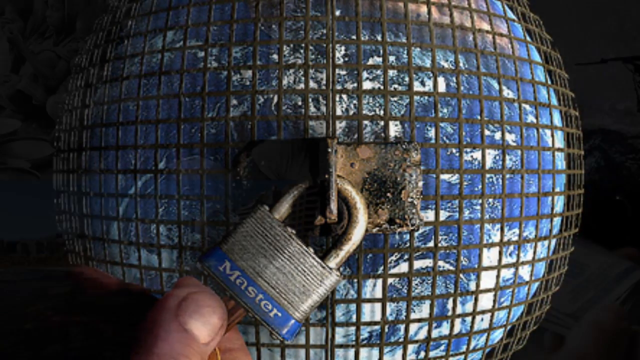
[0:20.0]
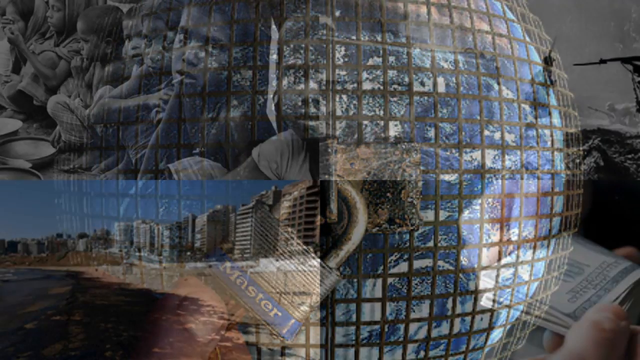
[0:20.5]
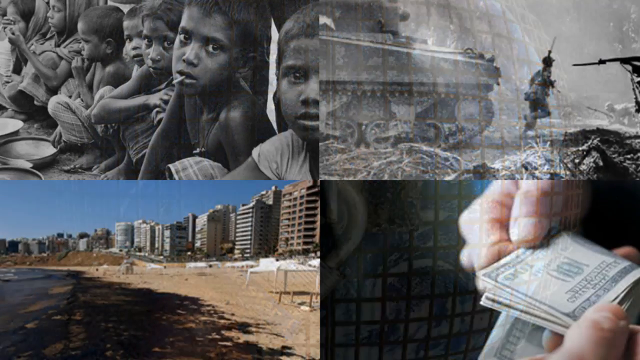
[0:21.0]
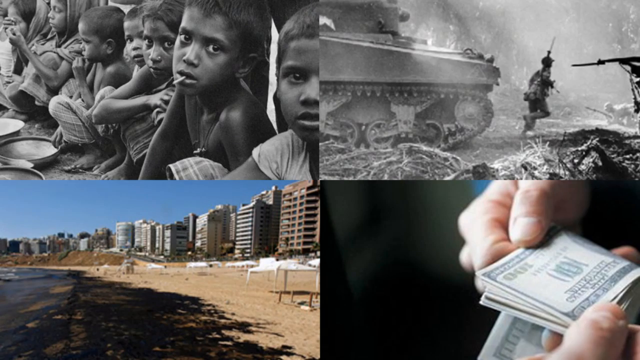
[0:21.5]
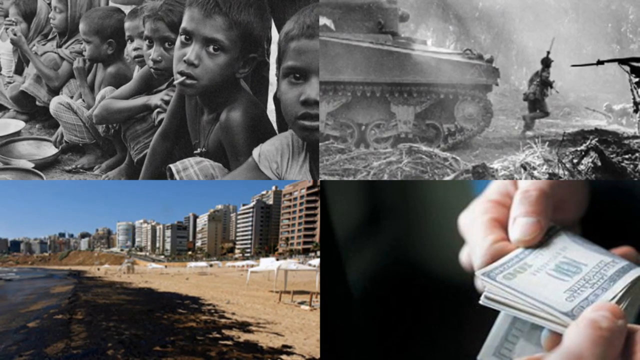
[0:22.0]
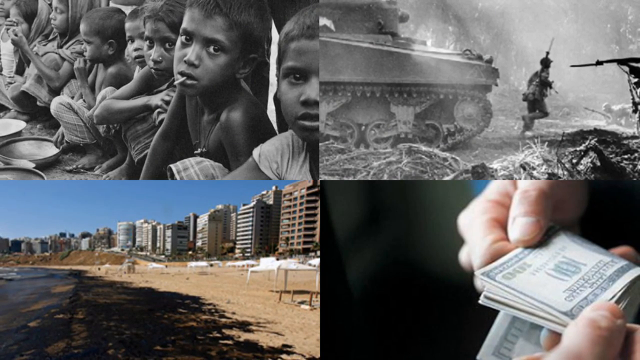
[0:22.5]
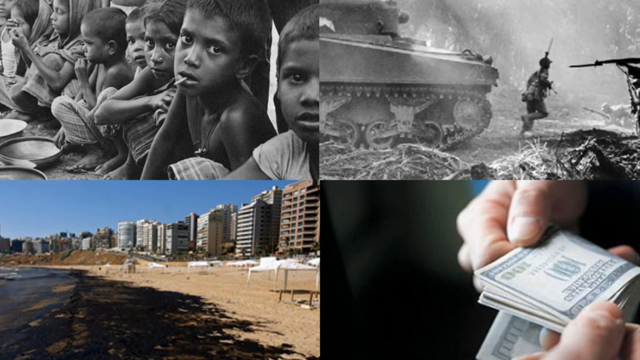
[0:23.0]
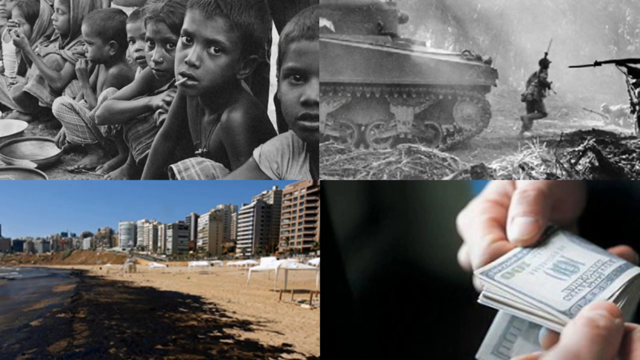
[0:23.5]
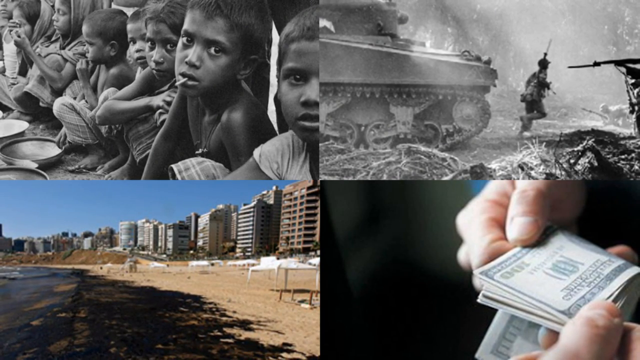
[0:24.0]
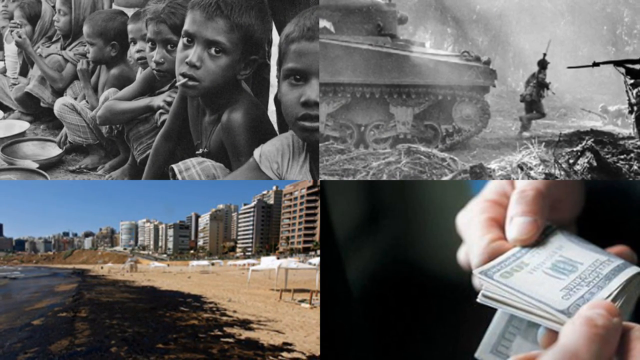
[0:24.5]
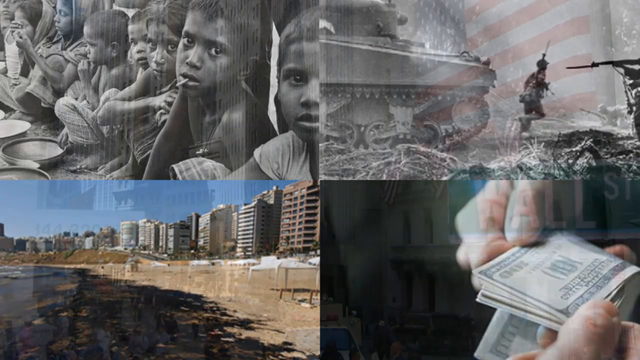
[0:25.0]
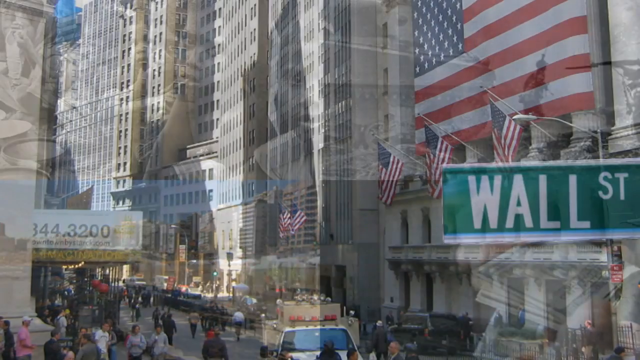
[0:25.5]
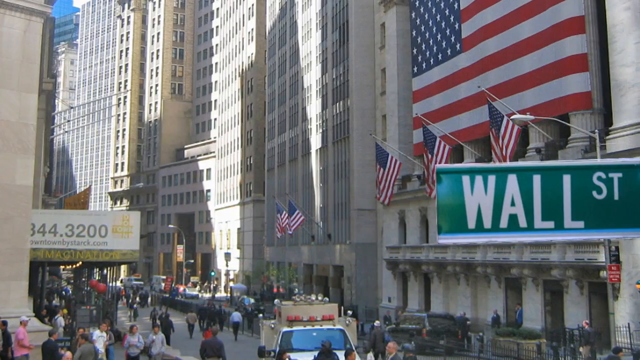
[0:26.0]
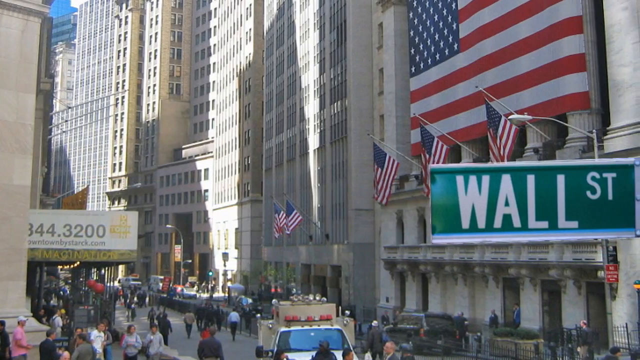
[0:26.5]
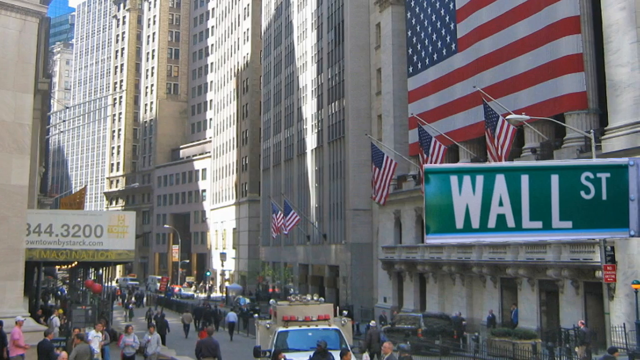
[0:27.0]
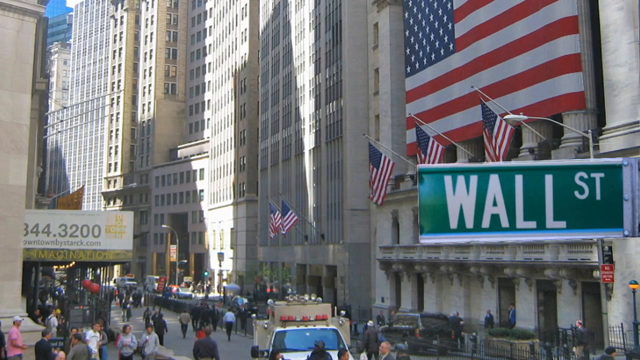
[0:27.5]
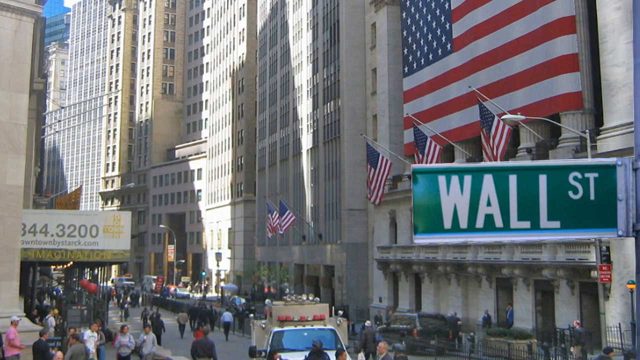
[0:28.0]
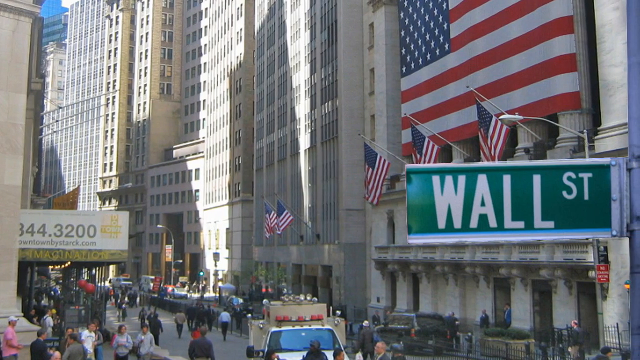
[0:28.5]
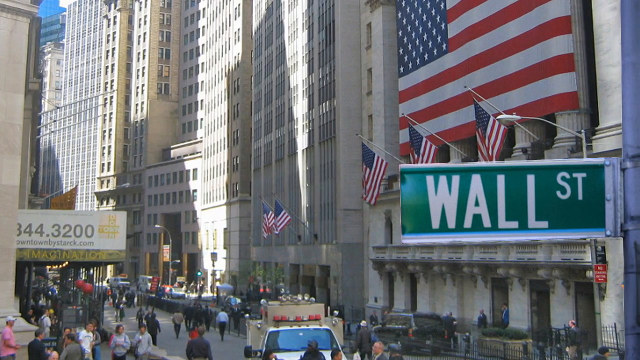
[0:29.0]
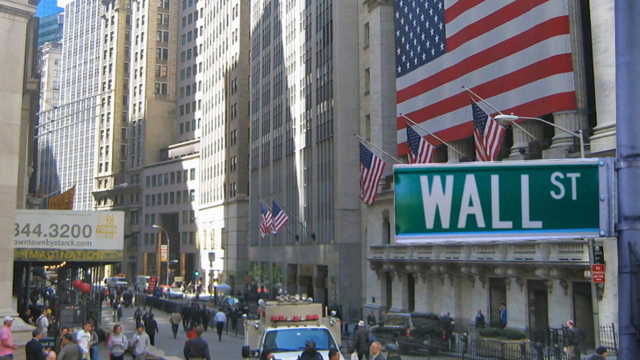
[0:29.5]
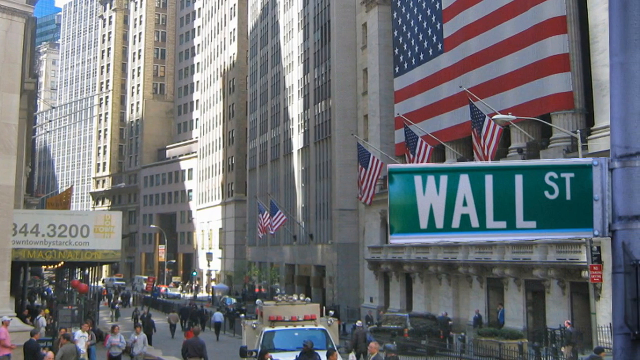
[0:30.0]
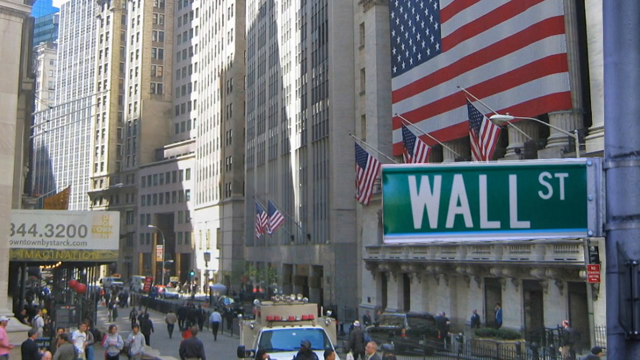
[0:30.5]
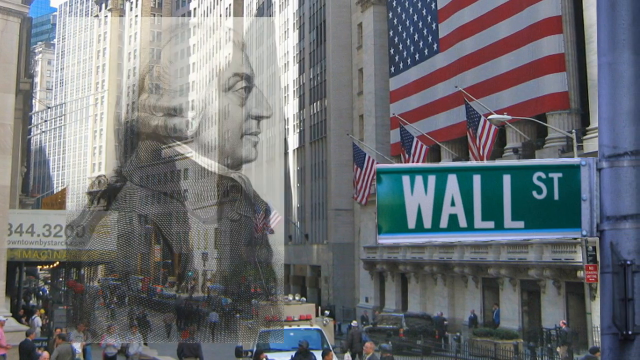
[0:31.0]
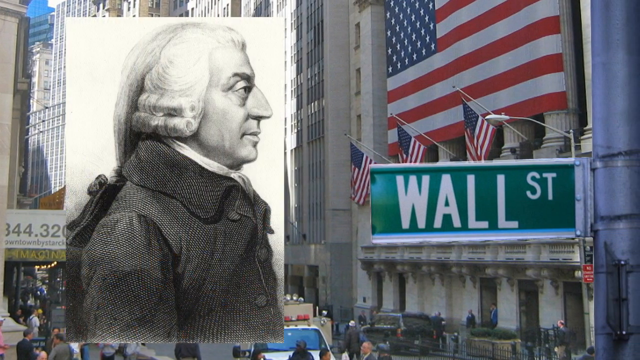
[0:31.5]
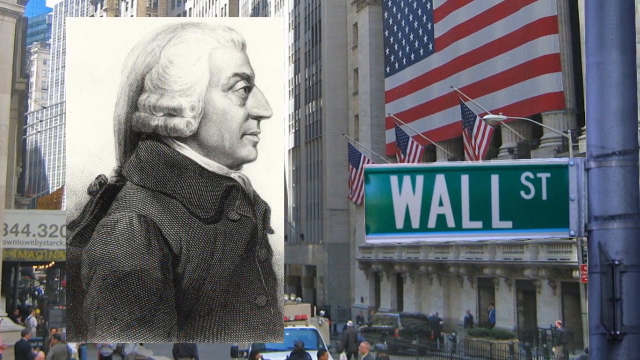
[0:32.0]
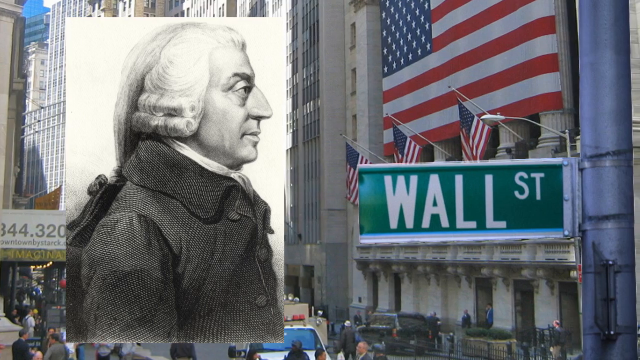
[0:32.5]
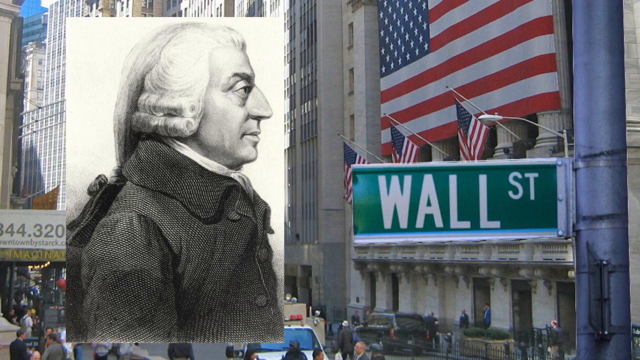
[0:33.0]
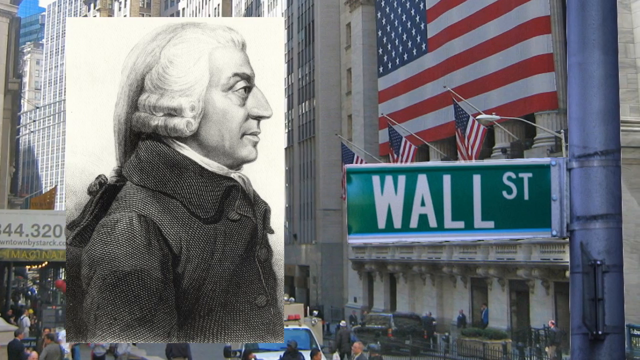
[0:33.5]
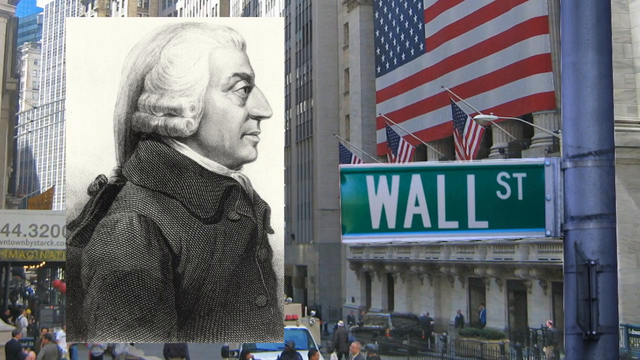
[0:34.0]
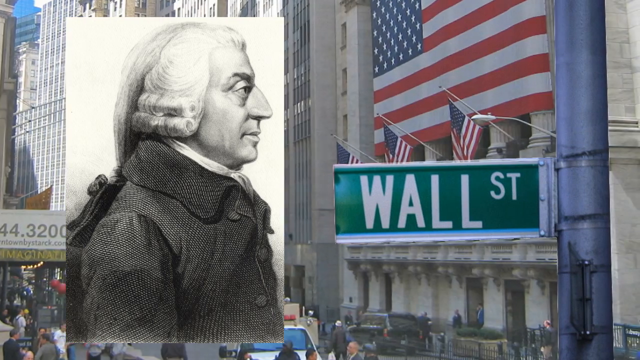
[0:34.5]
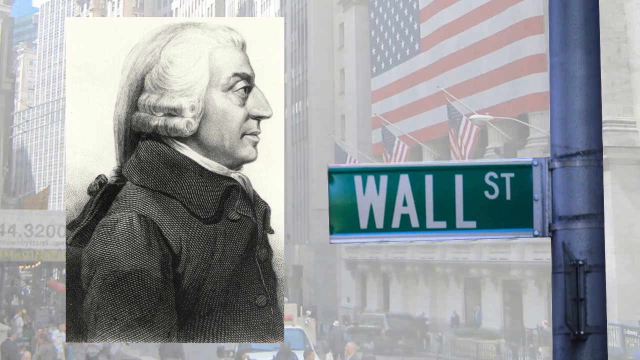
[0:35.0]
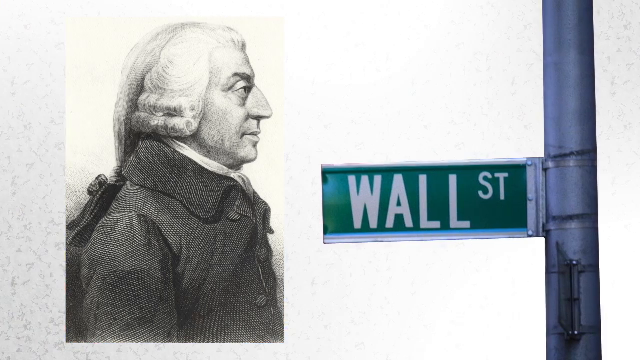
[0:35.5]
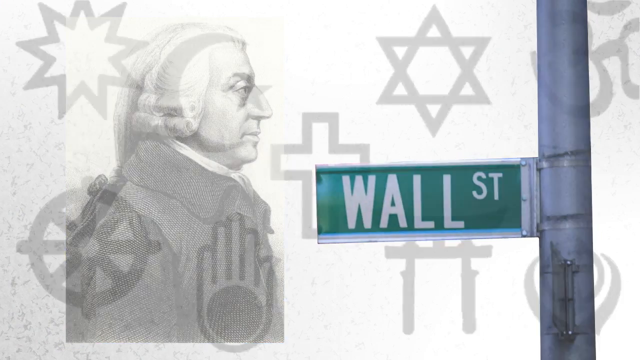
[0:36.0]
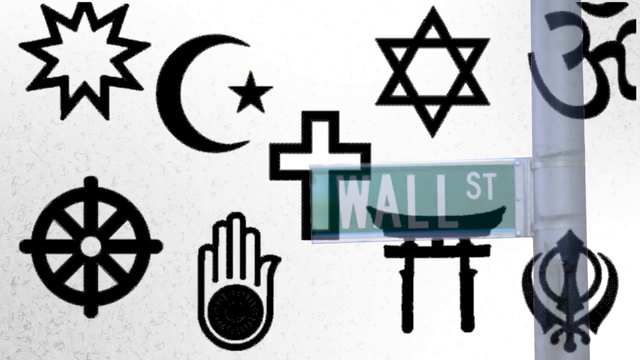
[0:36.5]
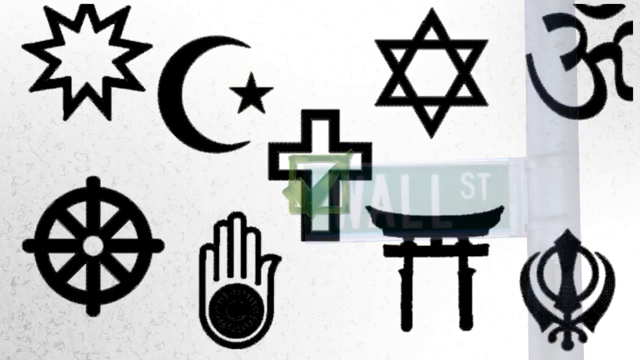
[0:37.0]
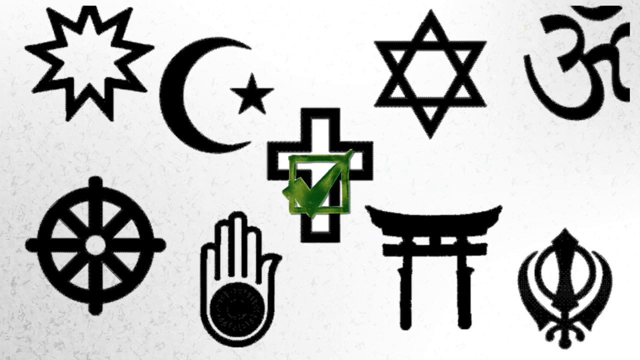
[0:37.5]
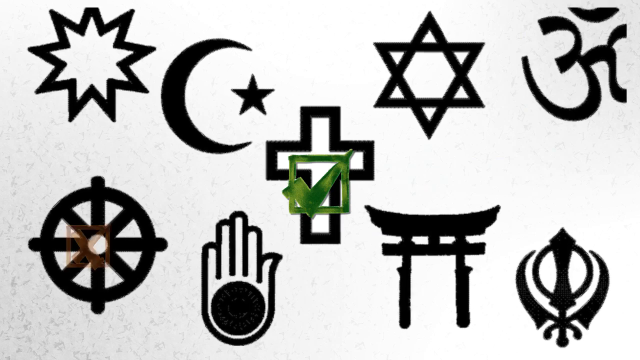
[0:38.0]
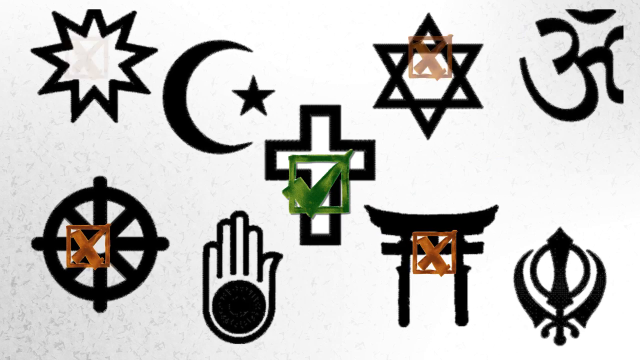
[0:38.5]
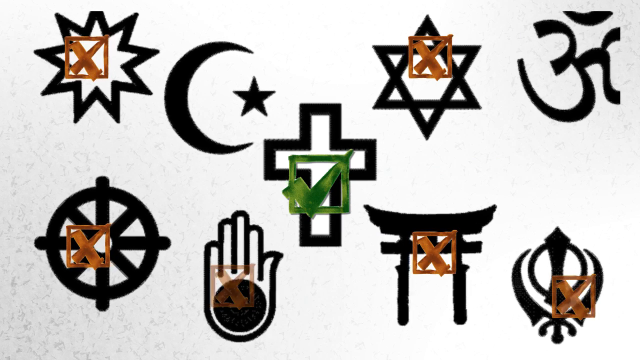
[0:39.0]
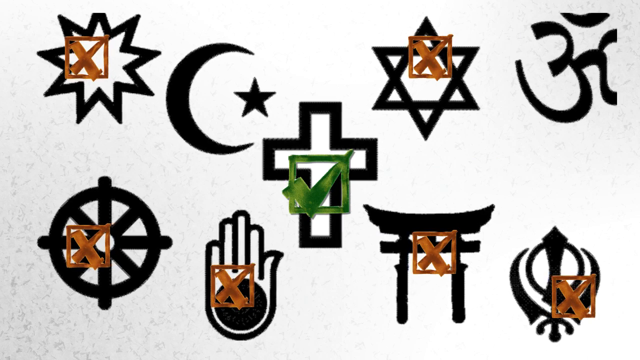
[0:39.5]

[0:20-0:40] The world is locked behind a steel gate with a lock on it; the gate is rounded, like the world. The screen then divides into four quadrants. The upper left shows poor children, another shows a beach with large buildings on the shore, another shows a battlefield with soldiers fighting, and the last shows money held in someone's right hand, a big wad of cash. A picture of Wall Street follows, with flags outside and a huge flag draped over the top, and on the left is a picture of an old-fashioned man. Many small black-and-white drawings follow. Again the world appears, locked by a very crusted, very rusted lock that looks as if it will never give.